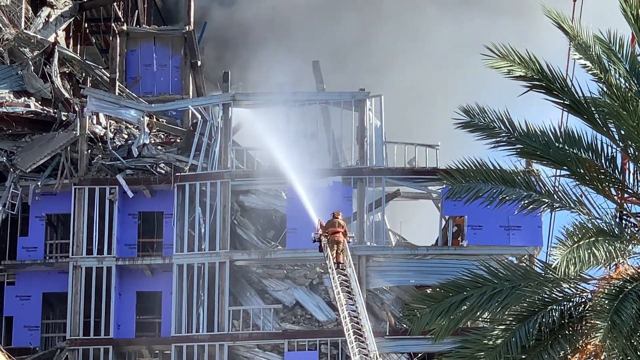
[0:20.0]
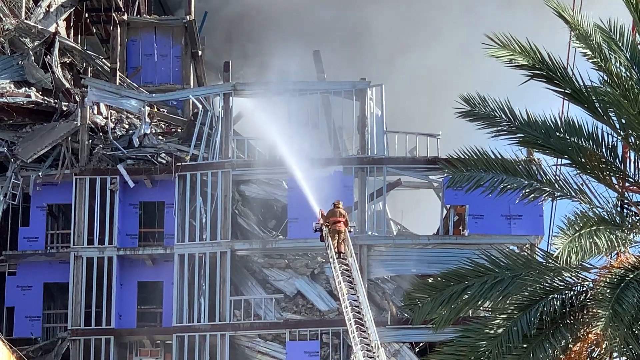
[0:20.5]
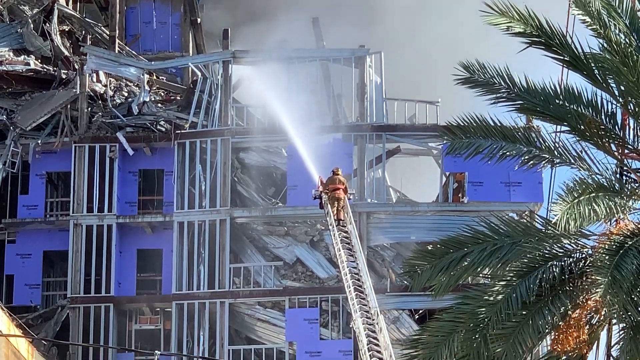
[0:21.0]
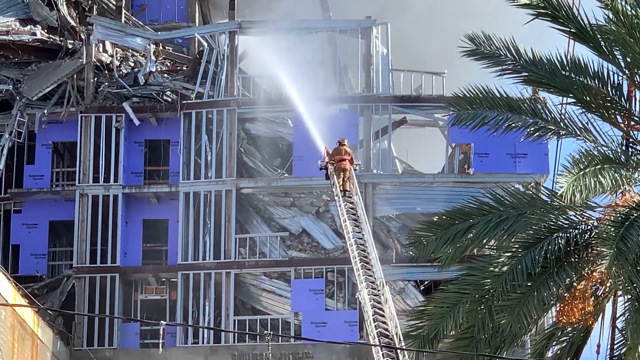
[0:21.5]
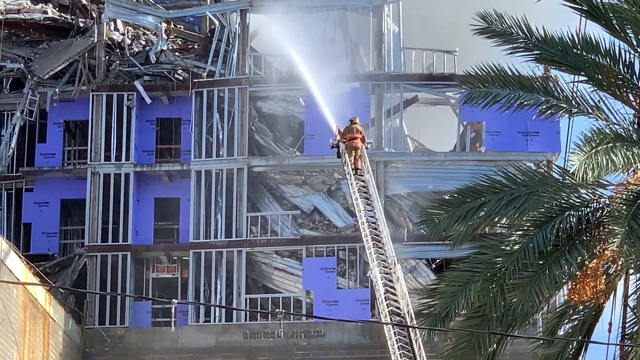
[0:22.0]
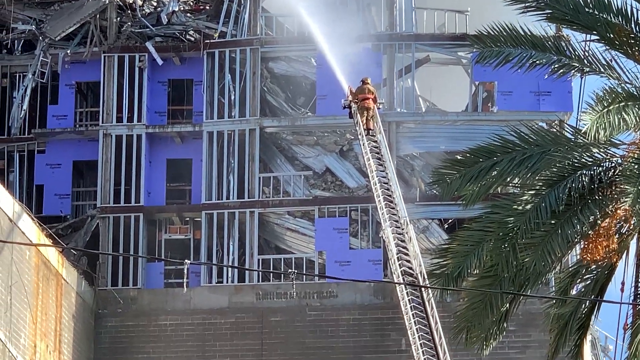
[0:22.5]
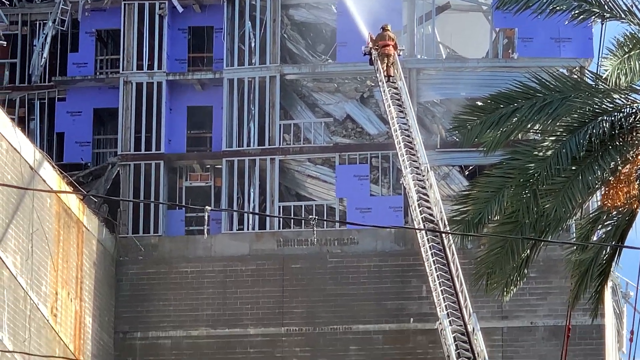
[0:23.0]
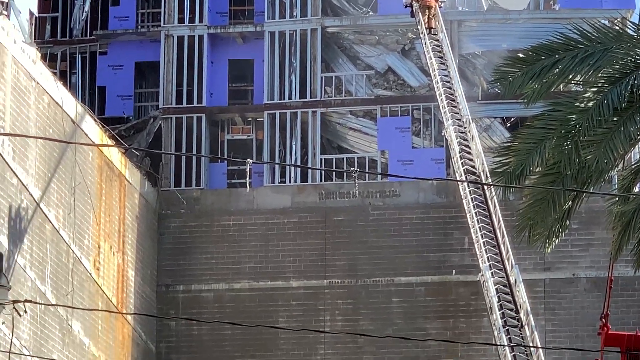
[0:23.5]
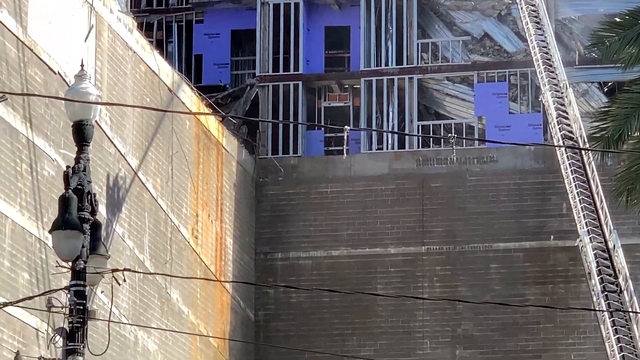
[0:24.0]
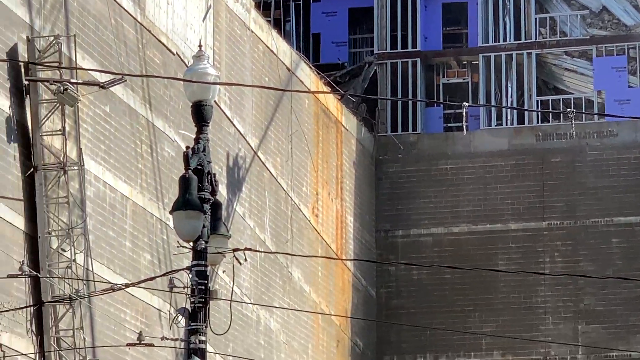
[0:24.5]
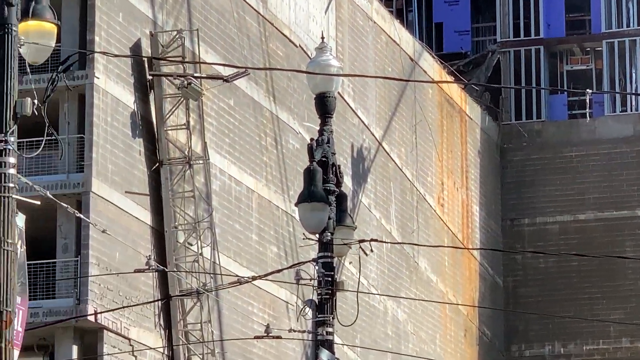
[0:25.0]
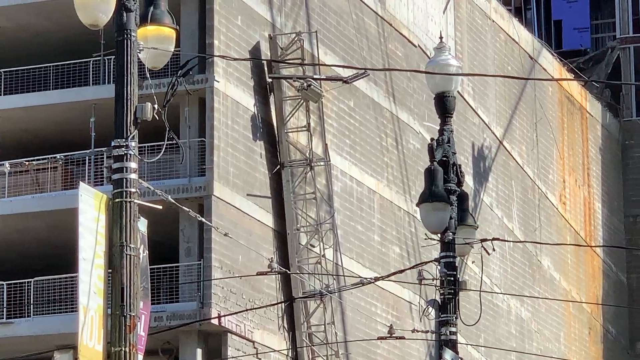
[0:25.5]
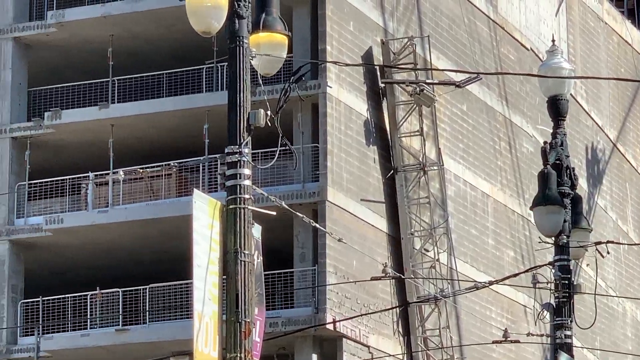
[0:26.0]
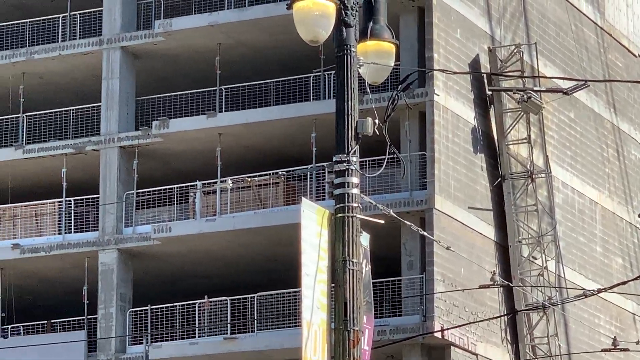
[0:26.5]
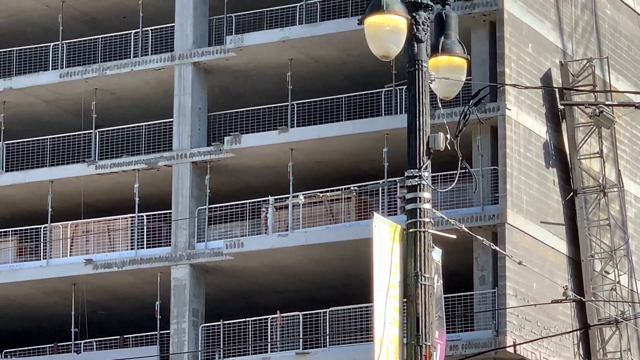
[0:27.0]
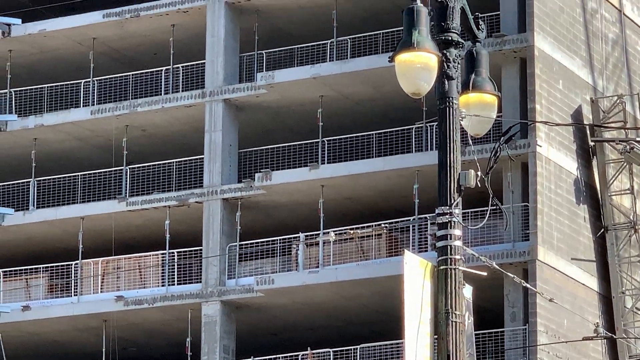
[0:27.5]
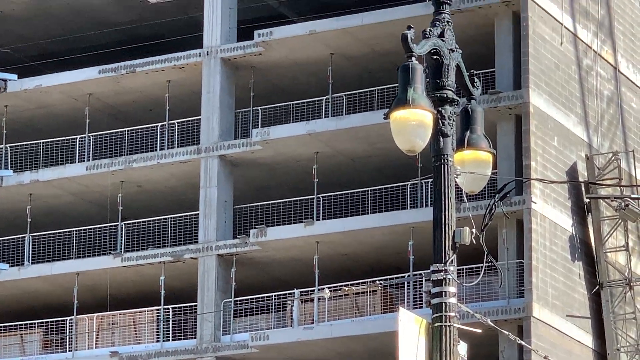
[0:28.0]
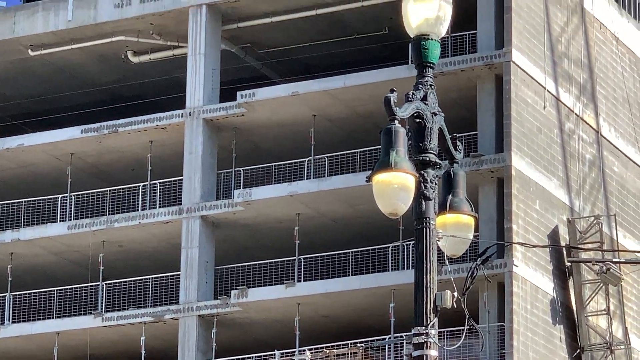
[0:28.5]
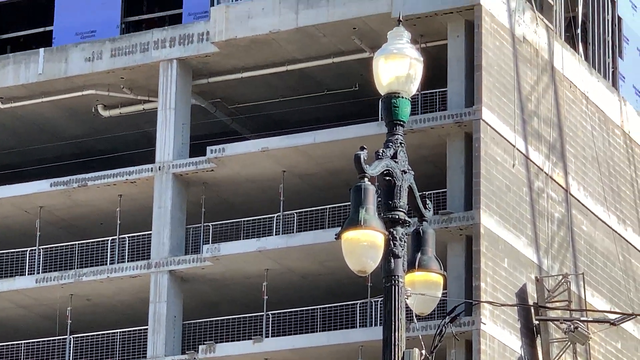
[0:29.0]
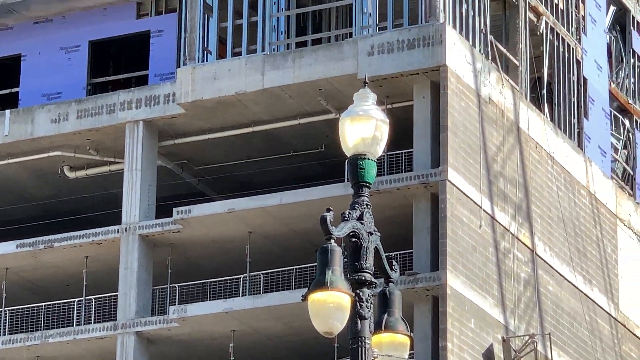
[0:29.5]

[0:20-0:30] The firefighter continues standing on top of the aerial ladder putting out the fire. The view moves downward and then to the left, showing the top of a lamp pole, another lamp pole, and what looks like an electric pole with electric wires connected to the lamp pole. The camera shifts to the left to show the side of one of the buildings with its balconies, then scans upward to show the upper area of the building.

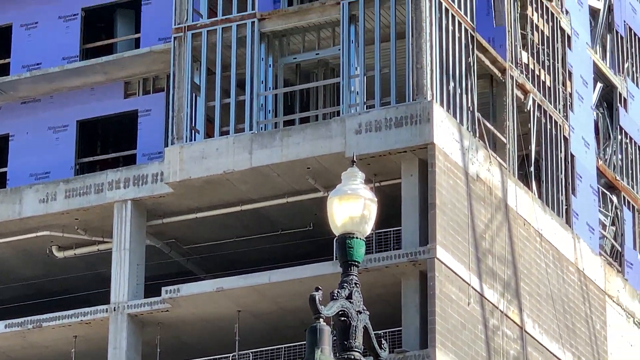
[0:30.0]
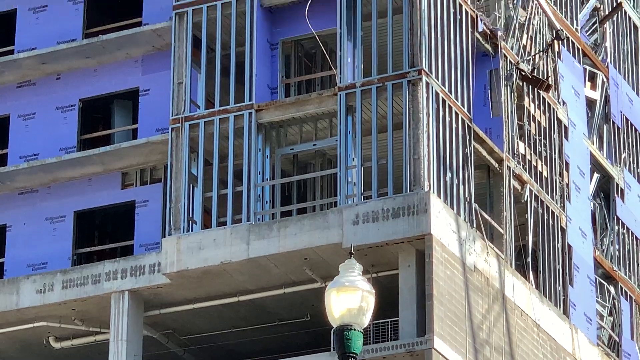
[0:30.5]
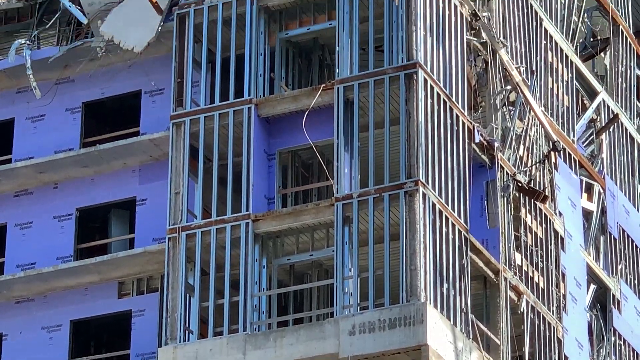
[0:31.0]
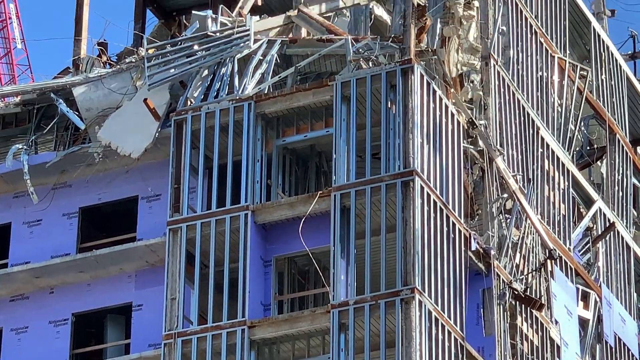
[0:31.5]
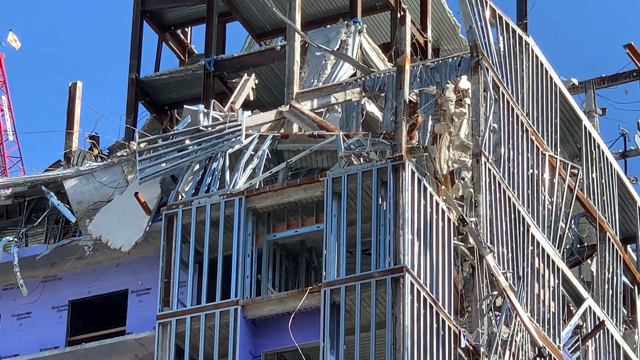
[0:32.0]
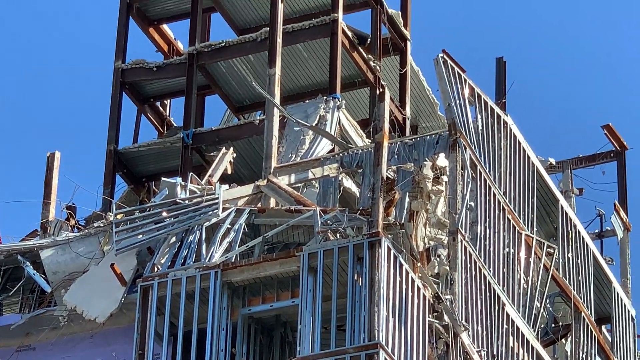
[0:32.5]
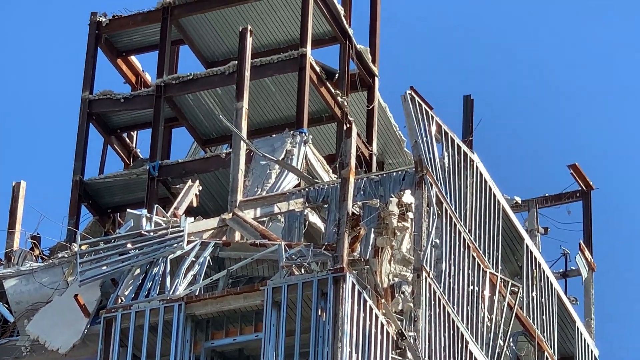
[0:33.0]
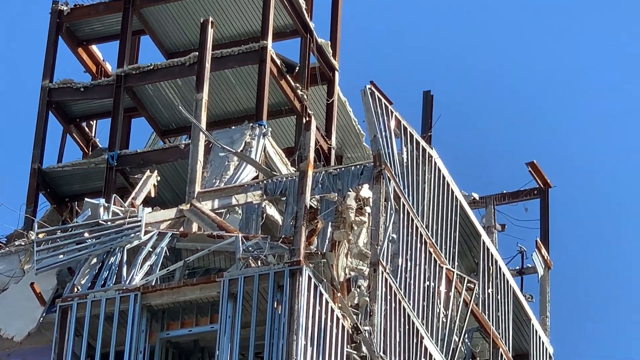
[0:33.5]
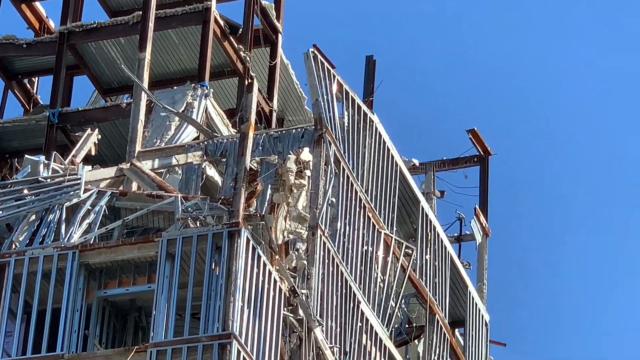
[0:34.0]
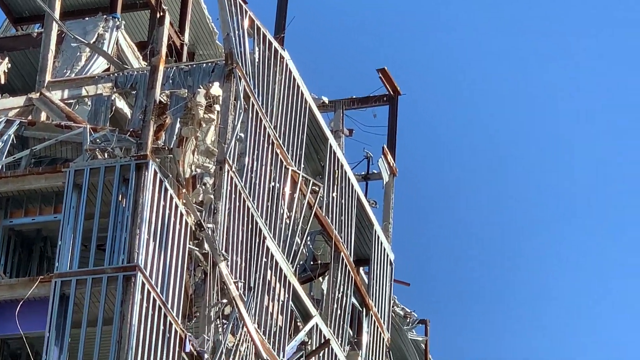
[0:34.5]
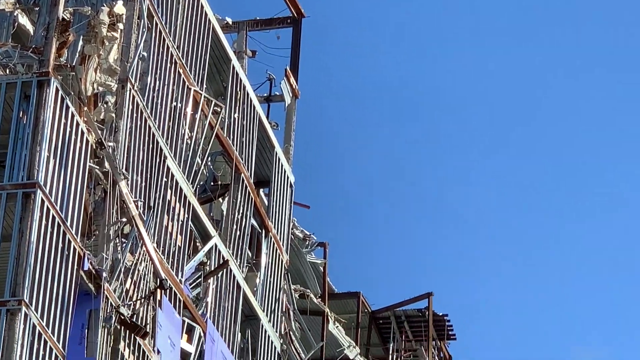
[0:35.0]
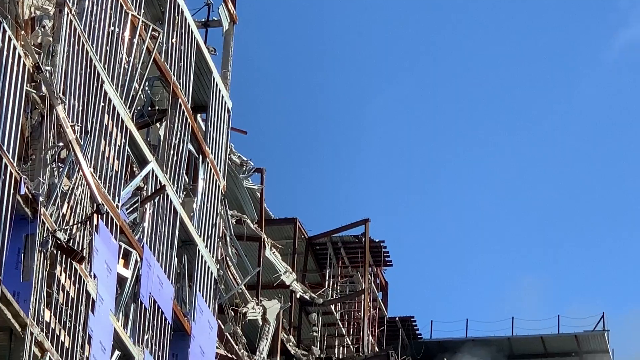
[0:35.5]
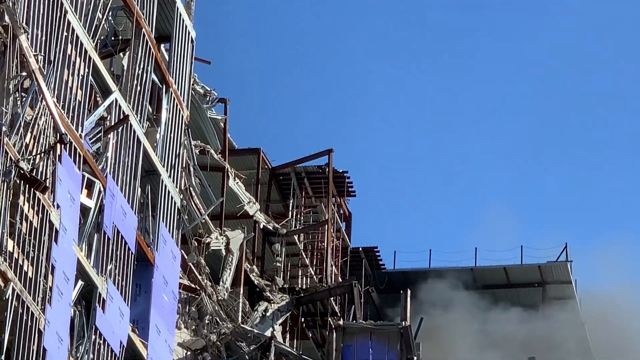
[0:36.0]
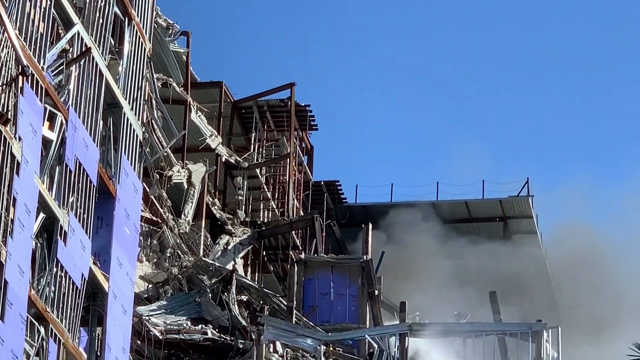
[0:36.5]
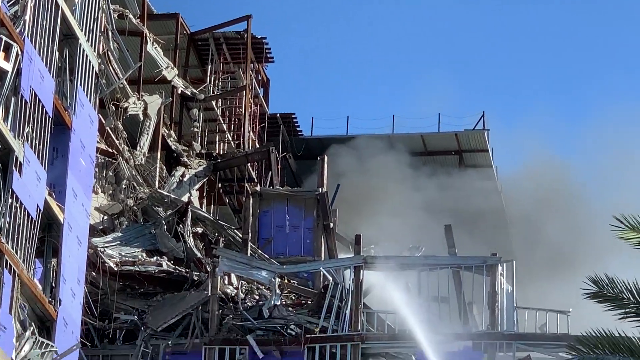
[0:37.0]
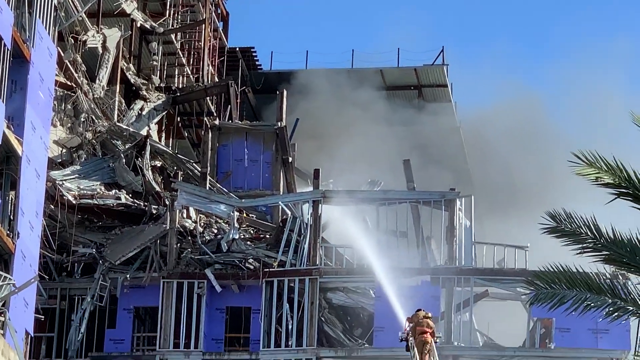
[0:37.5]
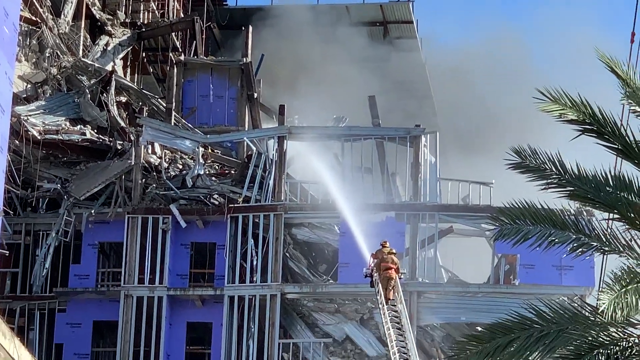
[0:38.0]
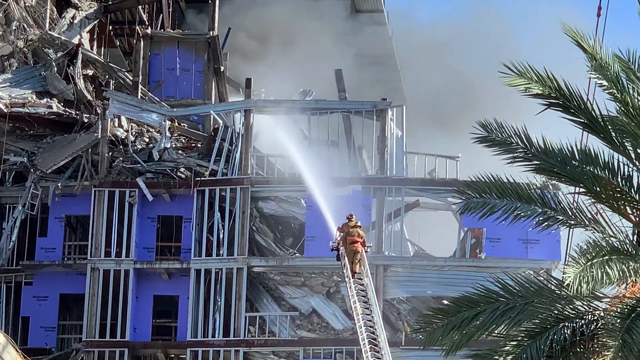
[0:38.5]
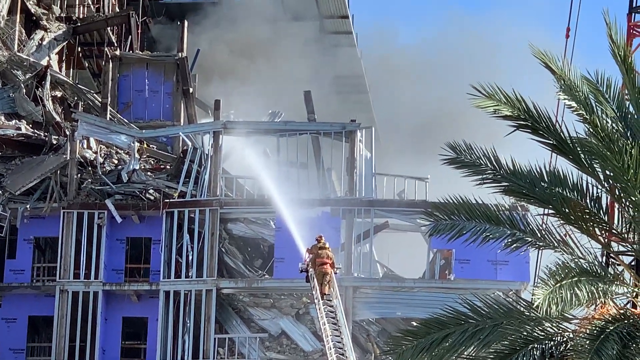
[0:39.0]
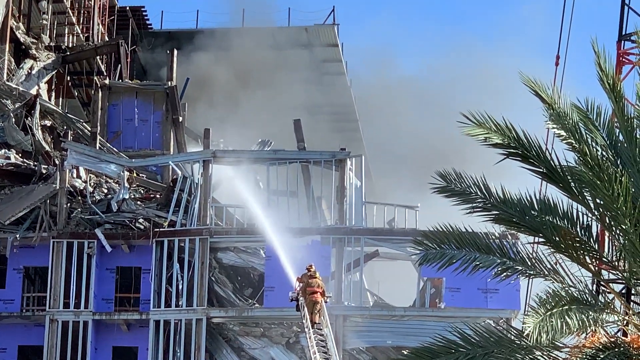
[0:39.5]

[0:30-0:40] The view goes upward to show the damaged building on the left side; its top part looks very damaged. The view then moves to the right and focuses on the building where the fire is being put out. Now two firefighters stand together on the top part of the aerial ladder, with a lot of water coming out of the hose they are holding as they try to put out the fire.